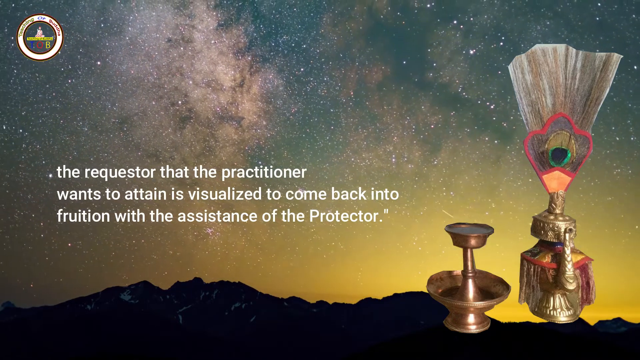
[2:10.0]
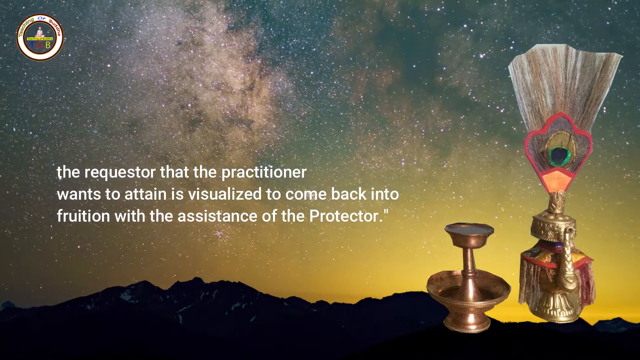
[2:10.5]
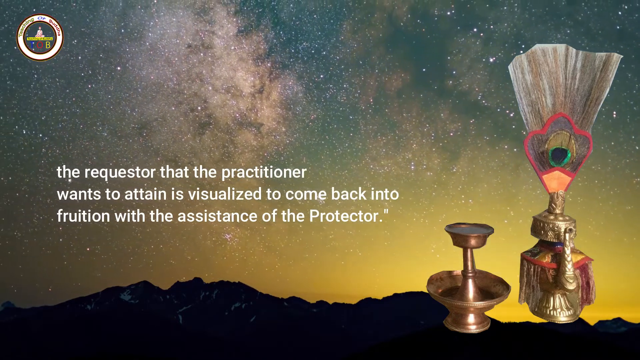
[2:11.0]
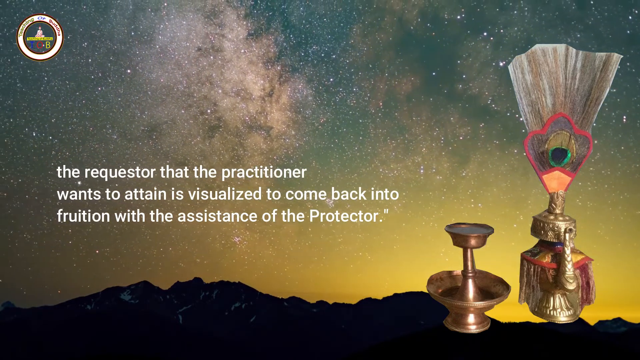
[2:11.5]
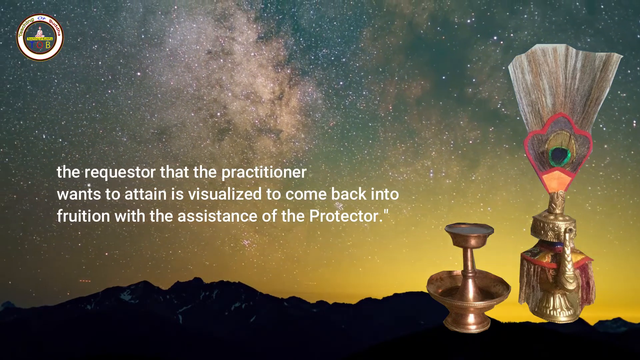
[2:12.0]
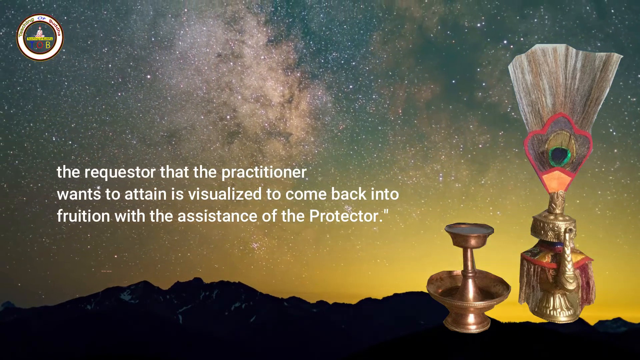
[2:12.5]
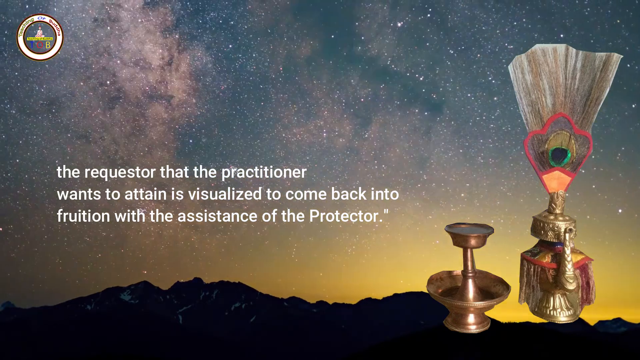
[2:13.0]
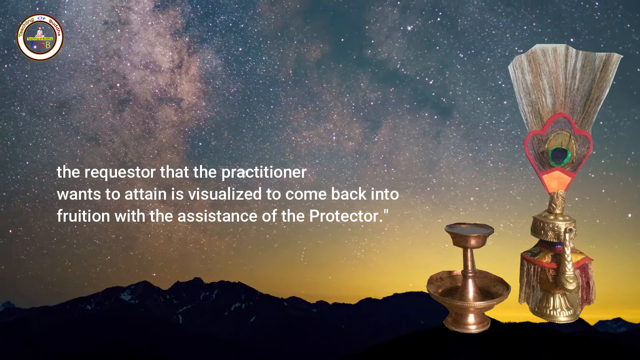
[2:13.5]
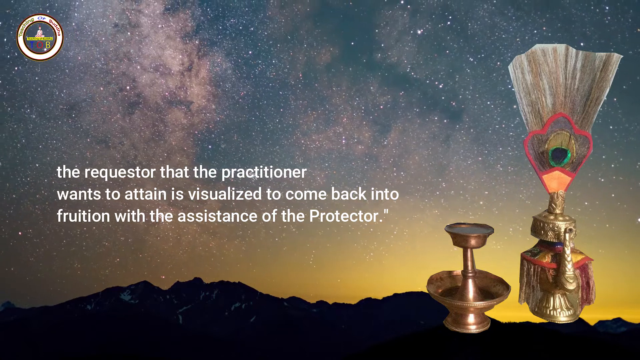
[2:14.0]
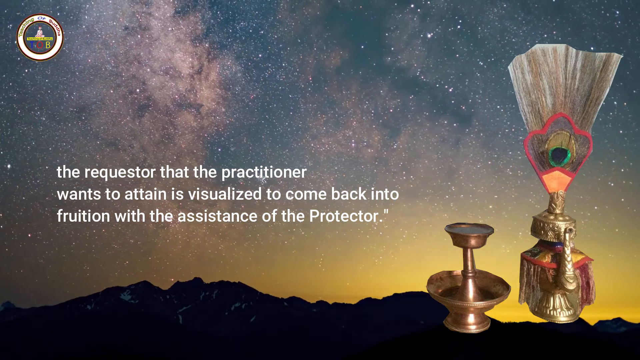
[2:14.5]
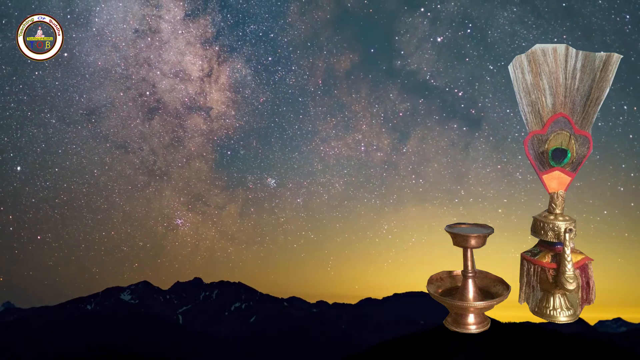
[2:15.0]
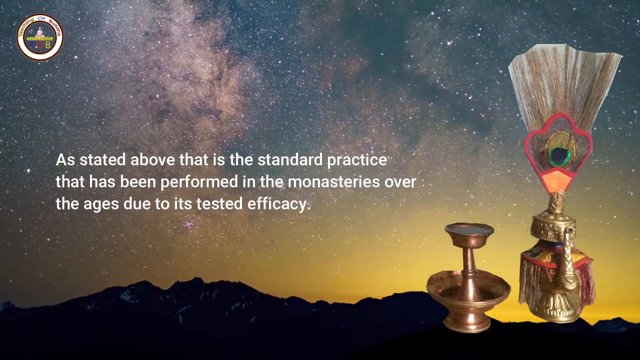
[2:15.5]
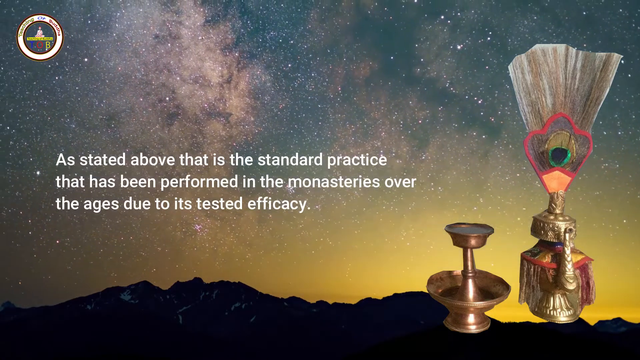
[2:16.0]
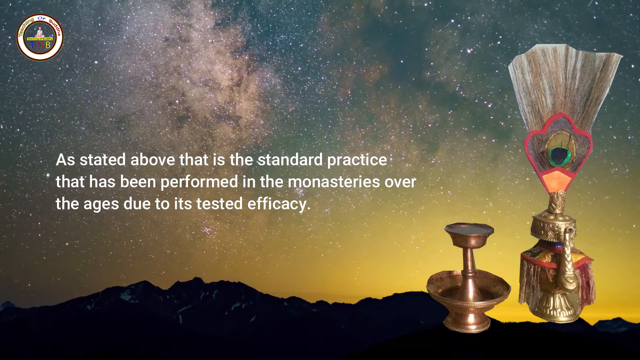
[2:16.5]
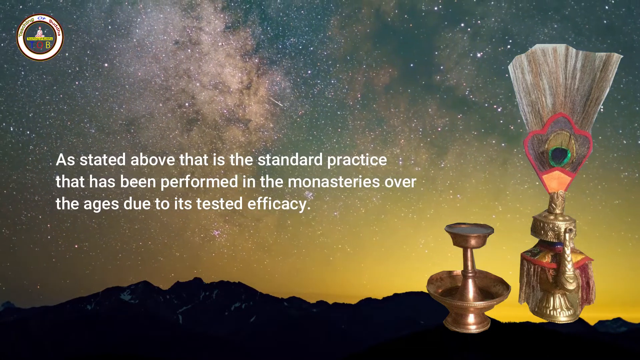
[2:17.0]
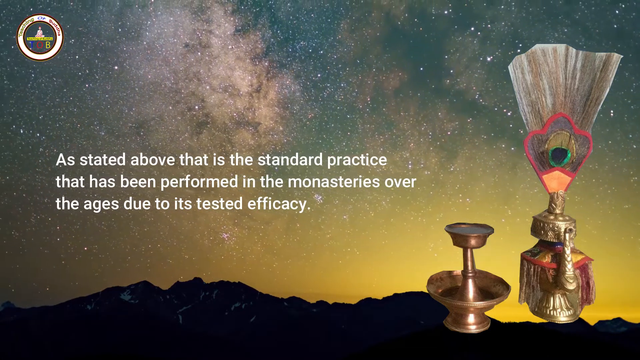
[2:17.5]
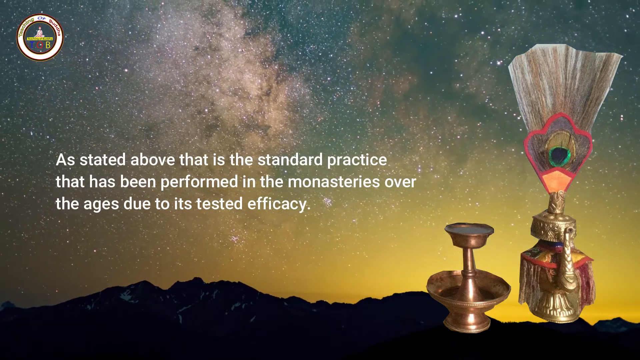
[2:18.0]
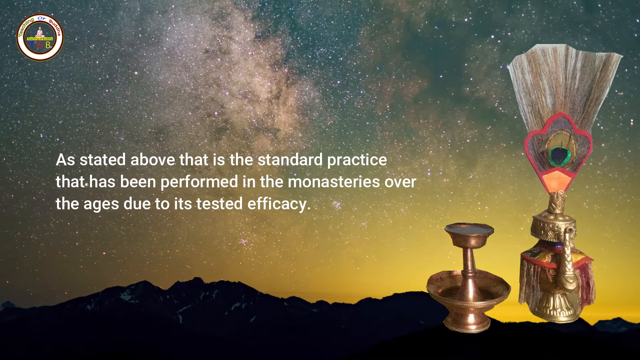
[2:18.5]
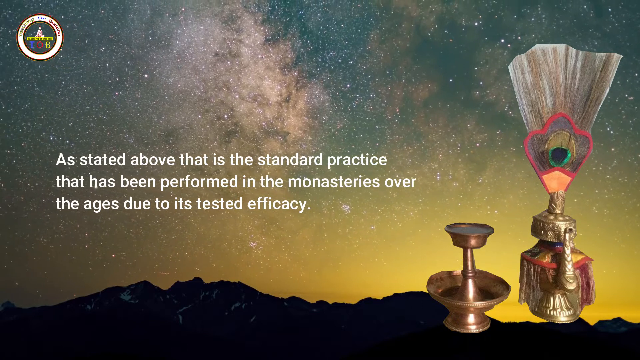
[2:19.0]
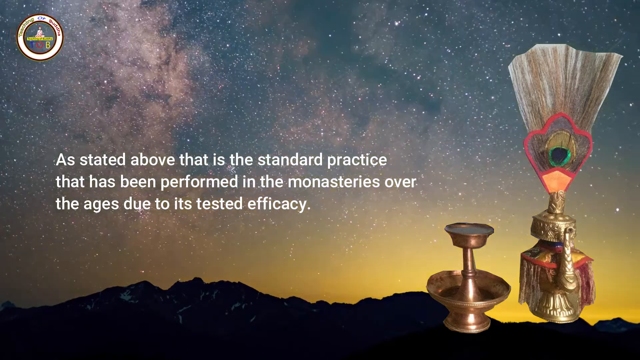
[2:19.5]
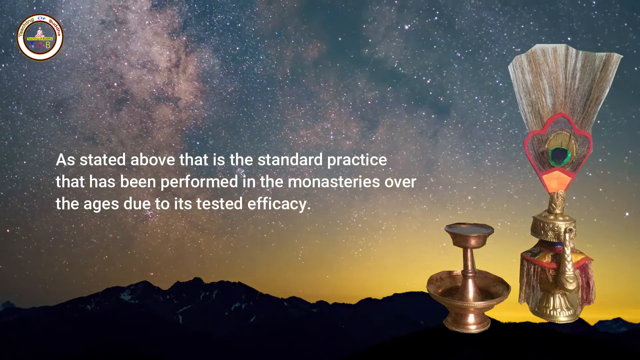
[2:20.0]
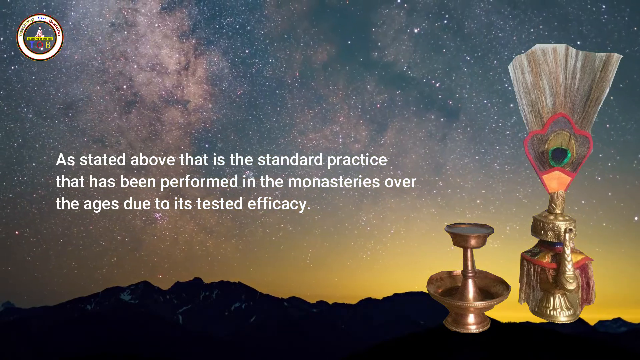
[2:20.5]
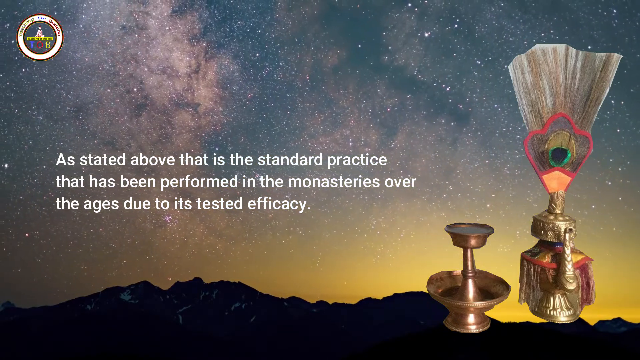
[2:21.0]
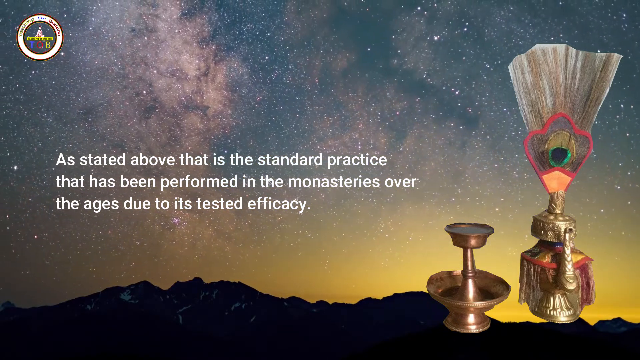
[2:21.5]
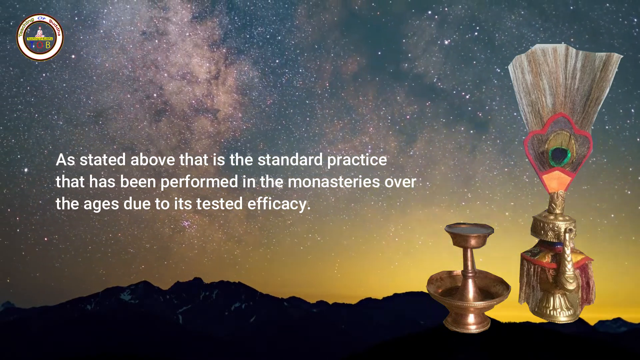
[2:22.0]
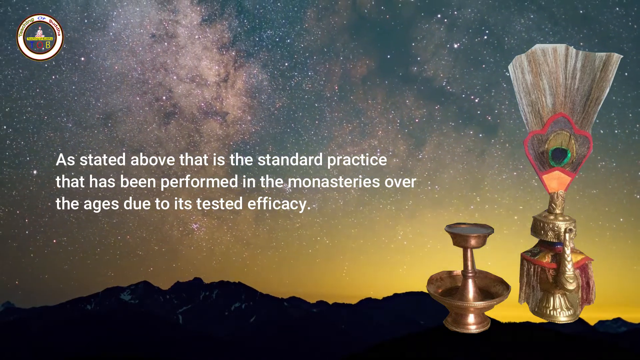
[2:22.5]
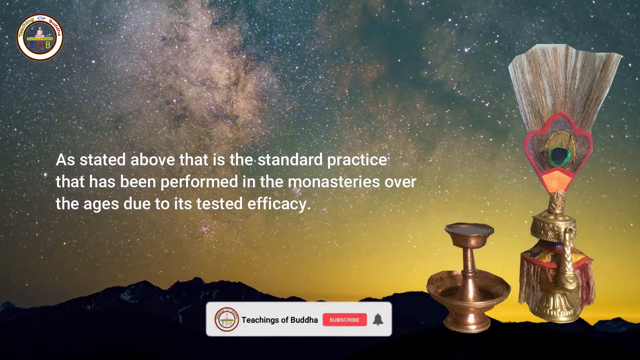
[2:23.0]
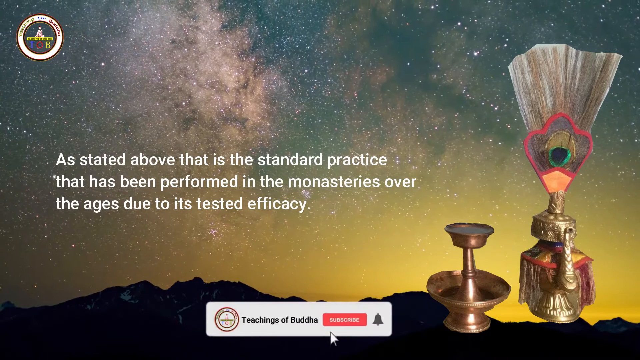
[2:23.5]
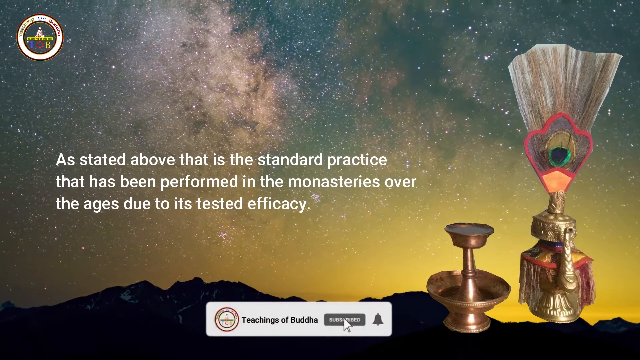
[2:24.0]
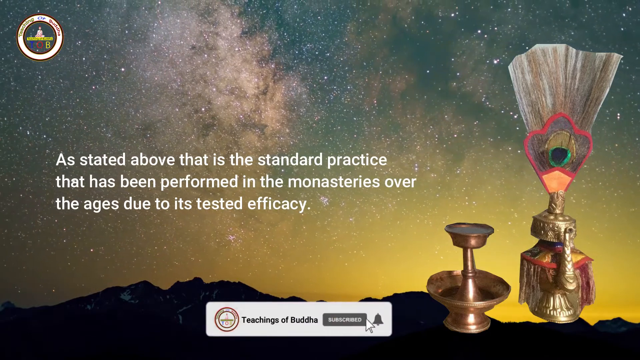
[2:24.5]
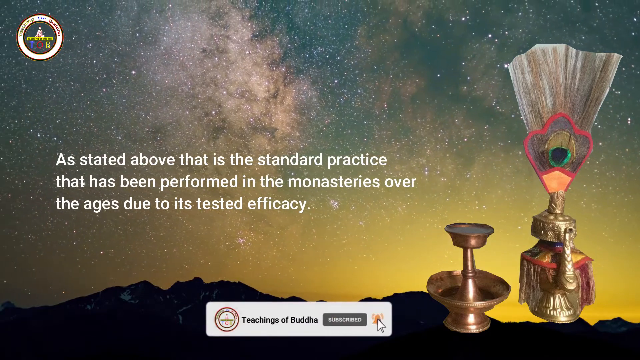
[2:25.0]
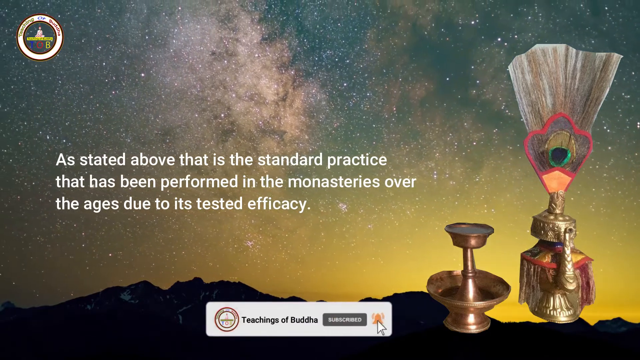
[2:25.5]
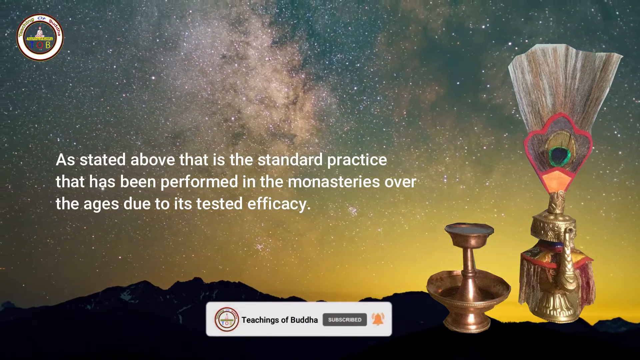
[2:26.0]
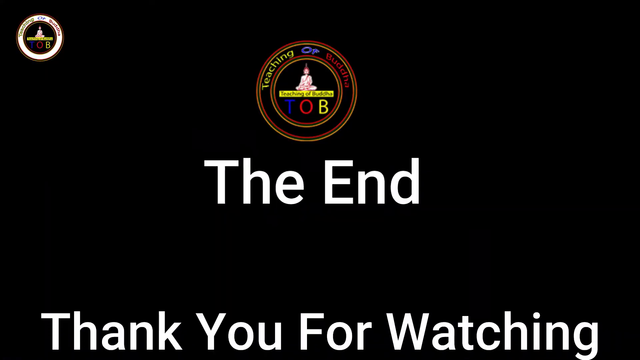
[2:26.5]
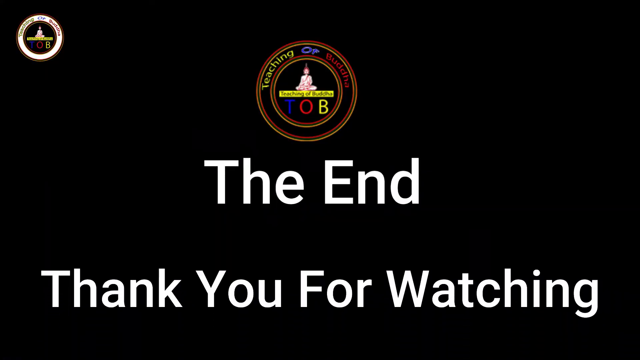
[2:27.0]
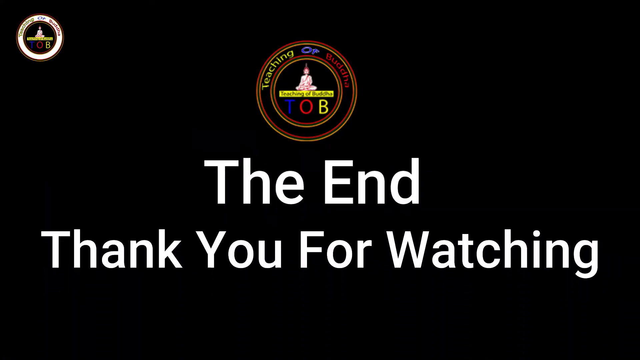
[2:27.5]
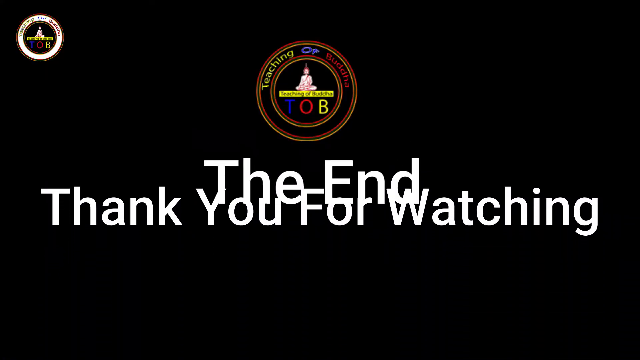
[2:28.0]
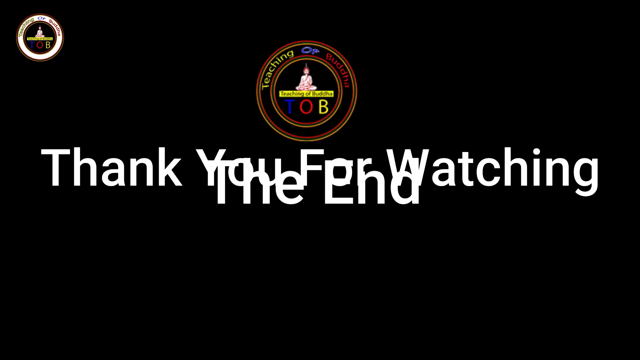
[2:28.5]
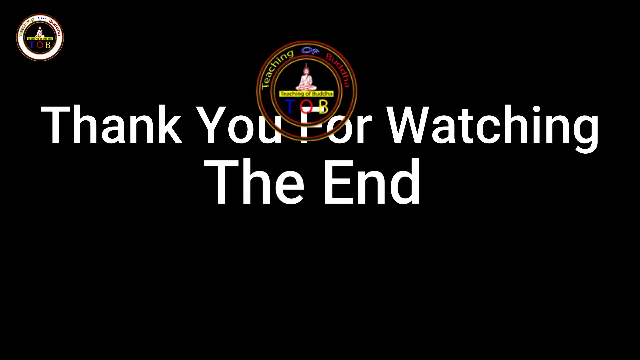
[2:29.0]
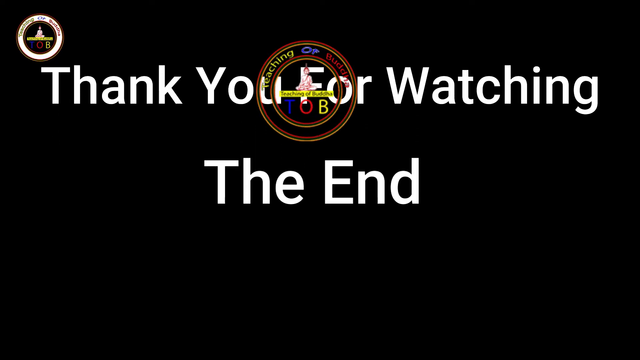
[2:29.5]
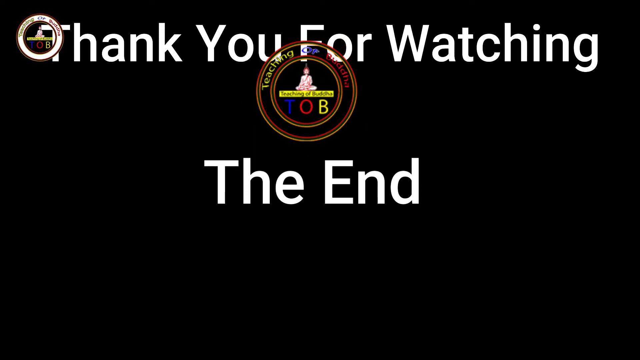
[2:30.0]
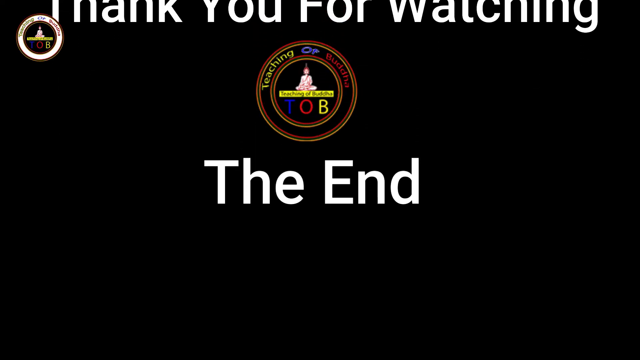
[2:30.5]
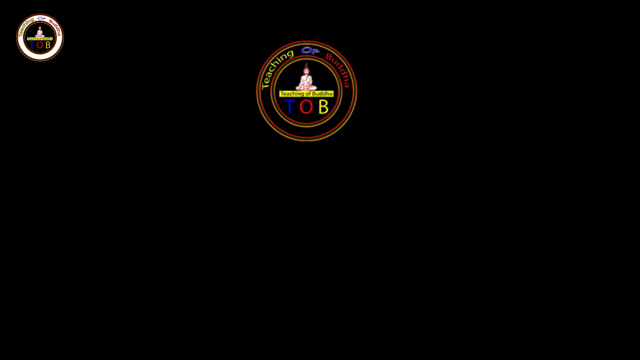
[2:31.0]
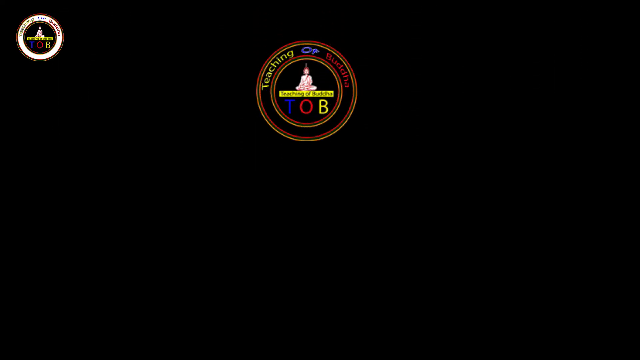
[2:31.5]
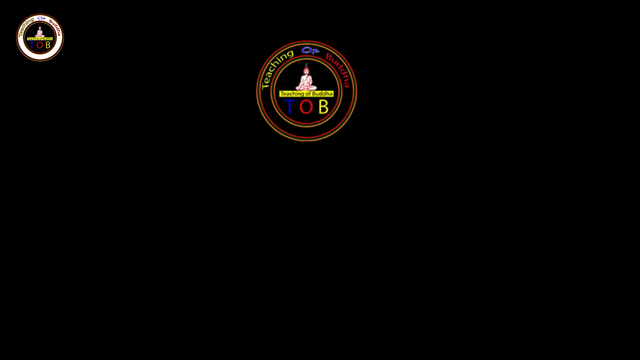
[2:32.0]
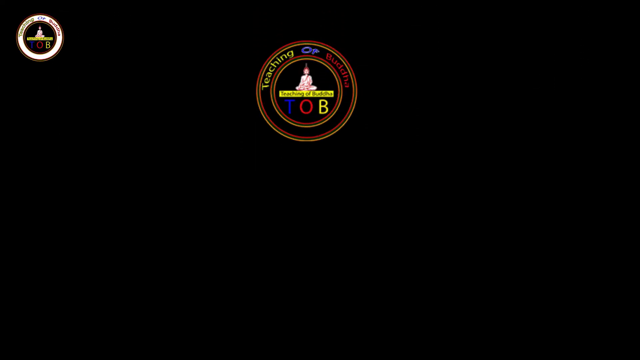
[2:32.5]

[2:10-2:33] The text changes to "as stated above, that is the standard practice that has been performed in the monasteries over the ages due to its tested efficacy." Another "teachings of Buddha" pop-up appears at the bottom center with a seal, a subscribe button and a bell icon. The cursor clicks subscribe, turning the button from red to gray, then presses the bell icon, which turns from gray to yellow. Toward the end the scene changes to a black background with a seal at the top that says "teachings of Buddha", a small image of Buddha sitting down with the acronym "TOB", and white text that says "thank you for watching." The "thank you for watching" line then moves up and passes over the end line, and the end line disappears.